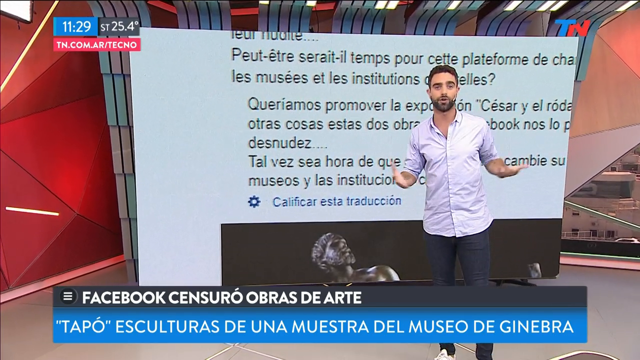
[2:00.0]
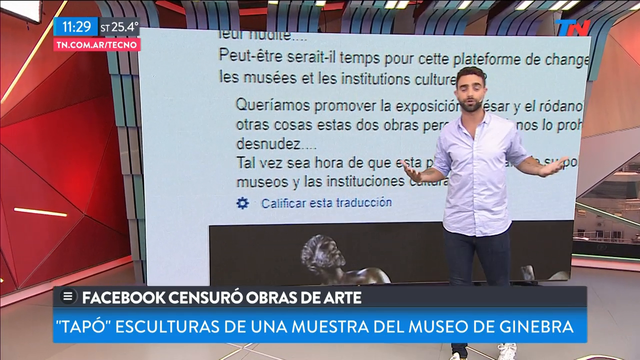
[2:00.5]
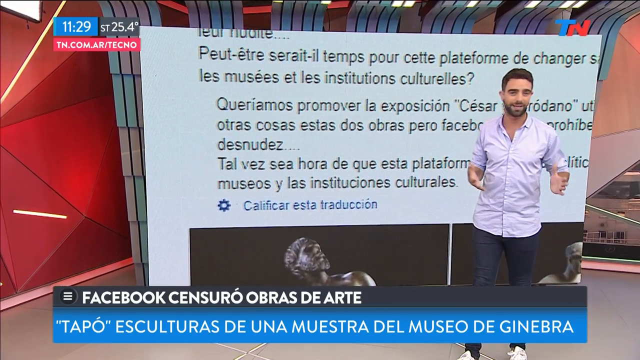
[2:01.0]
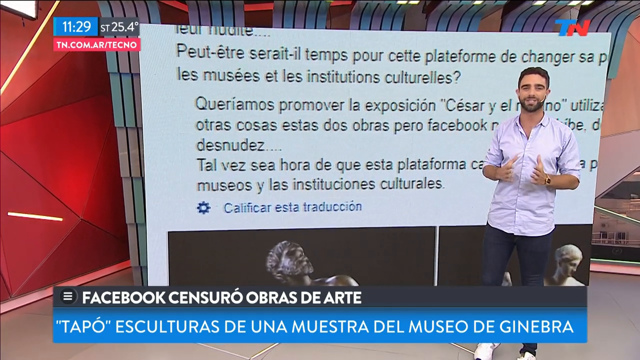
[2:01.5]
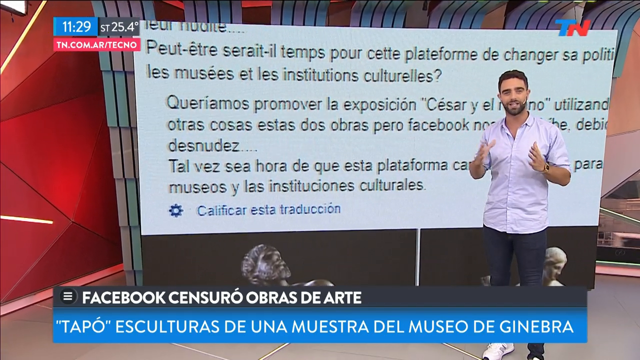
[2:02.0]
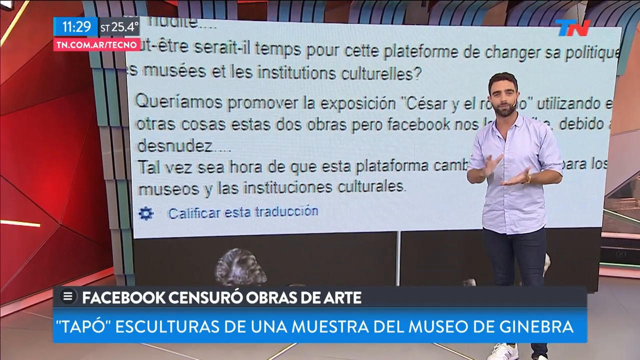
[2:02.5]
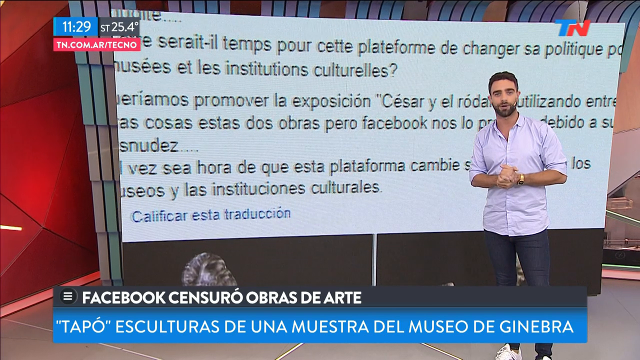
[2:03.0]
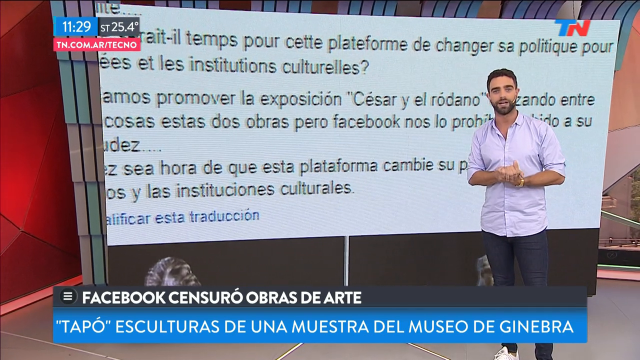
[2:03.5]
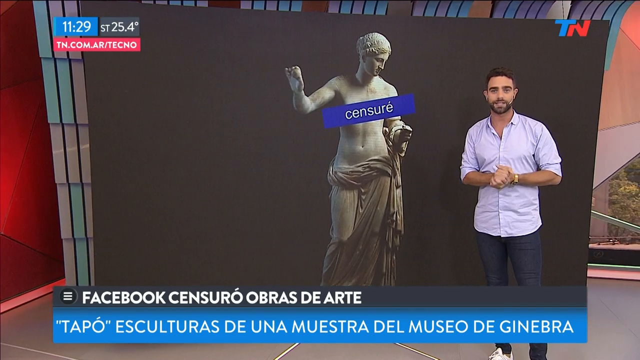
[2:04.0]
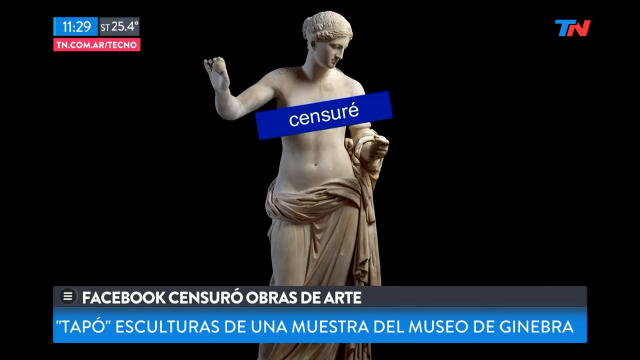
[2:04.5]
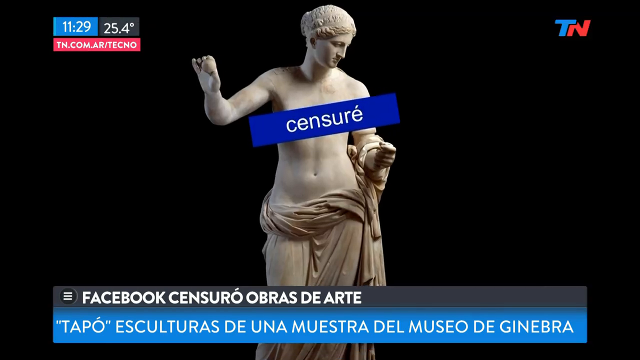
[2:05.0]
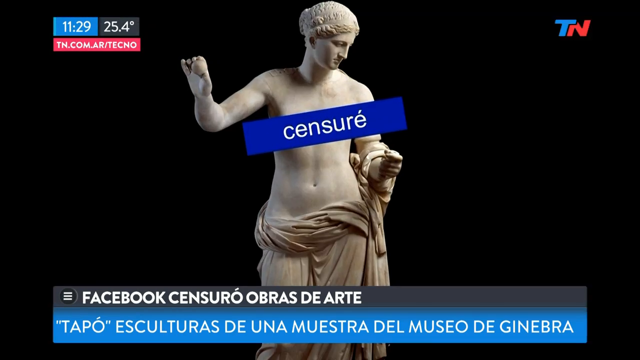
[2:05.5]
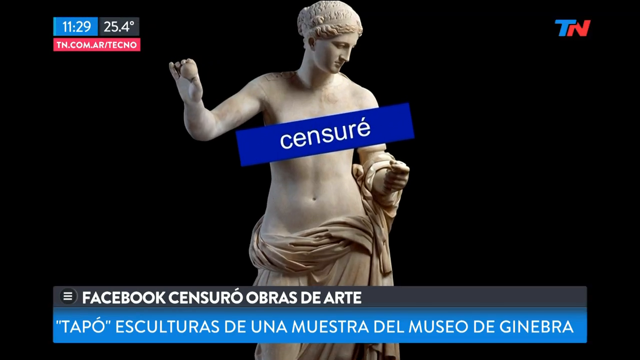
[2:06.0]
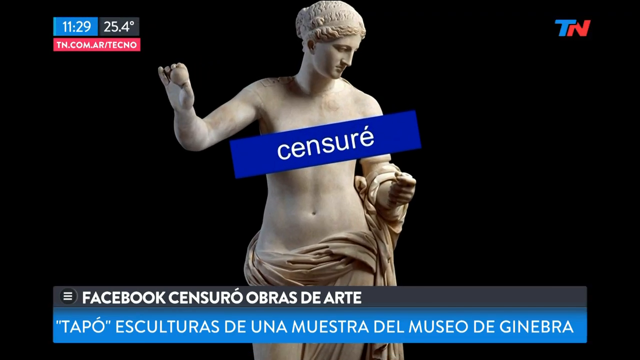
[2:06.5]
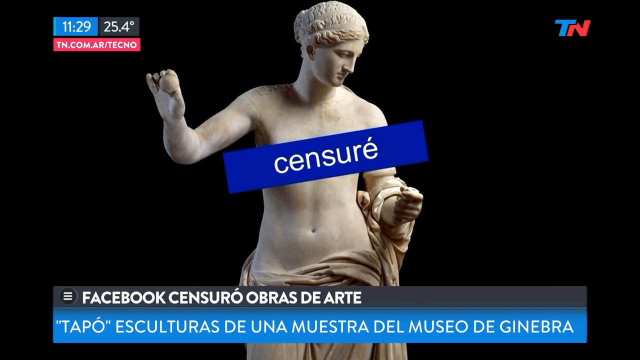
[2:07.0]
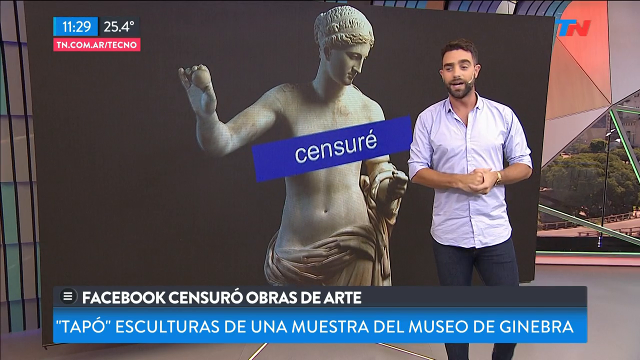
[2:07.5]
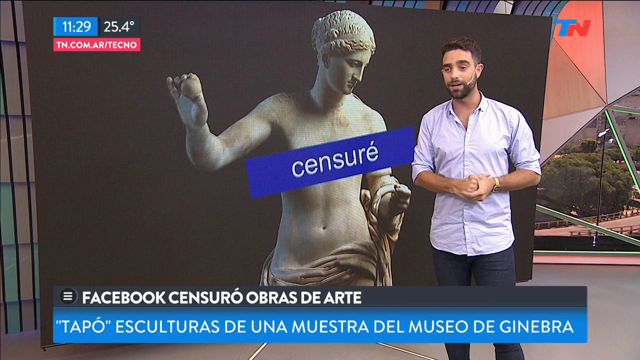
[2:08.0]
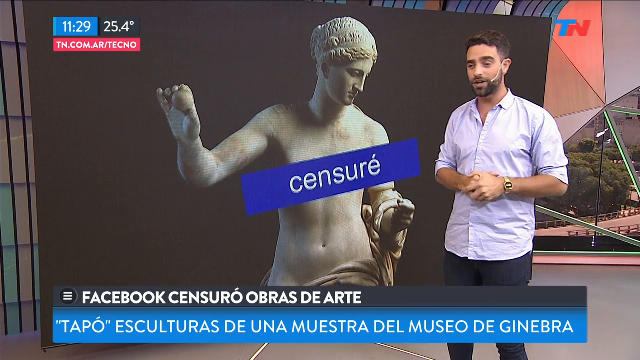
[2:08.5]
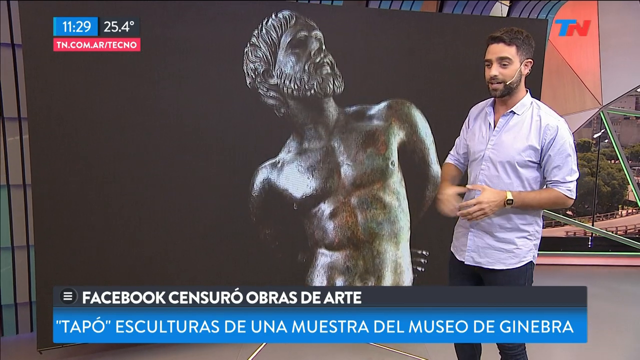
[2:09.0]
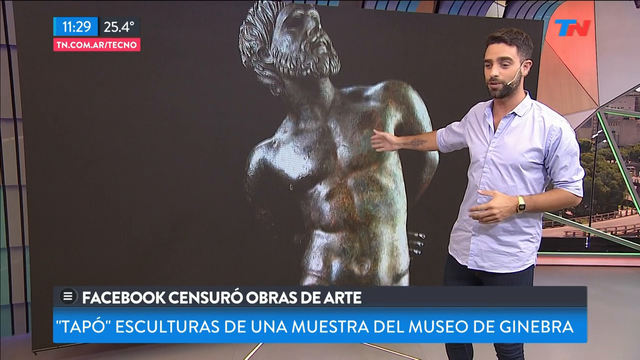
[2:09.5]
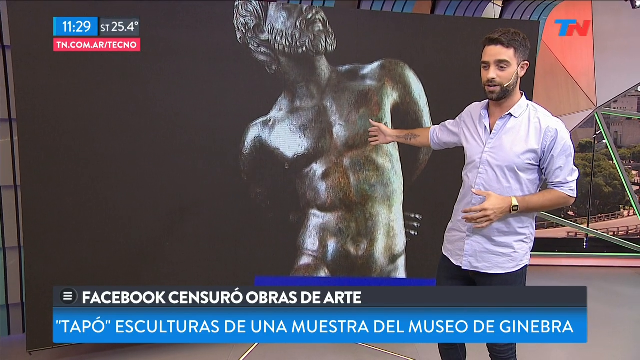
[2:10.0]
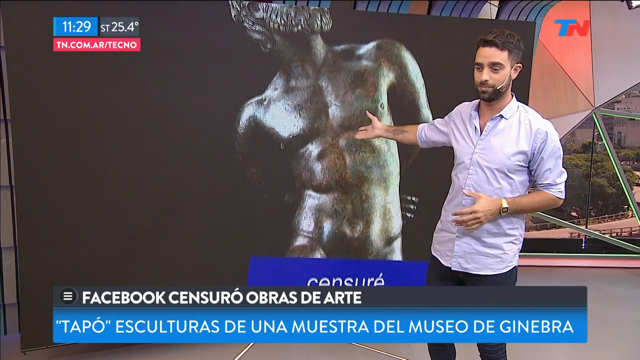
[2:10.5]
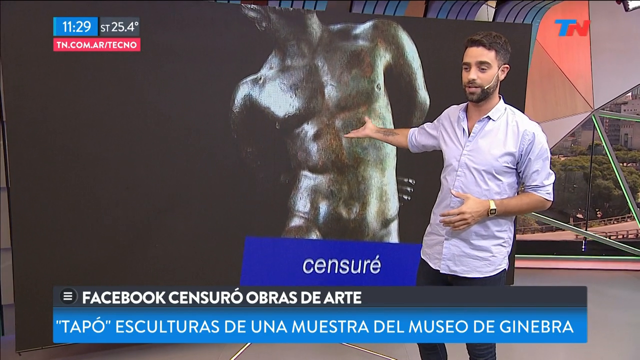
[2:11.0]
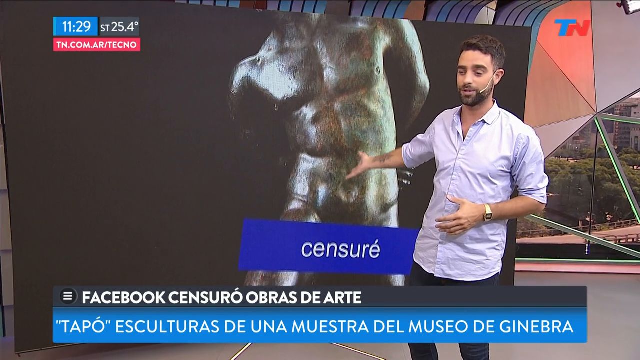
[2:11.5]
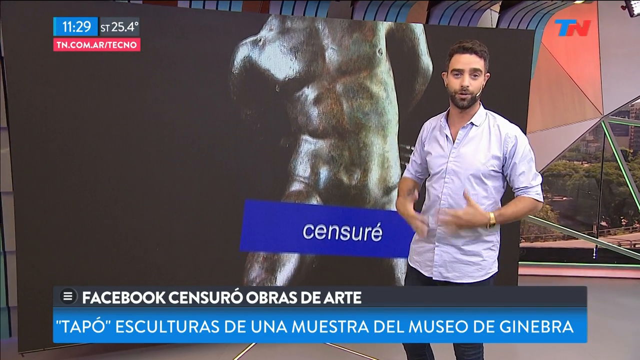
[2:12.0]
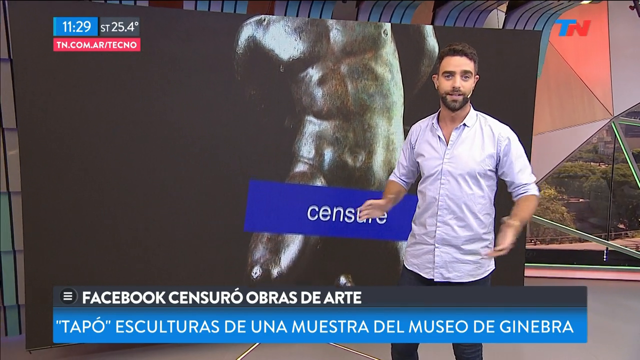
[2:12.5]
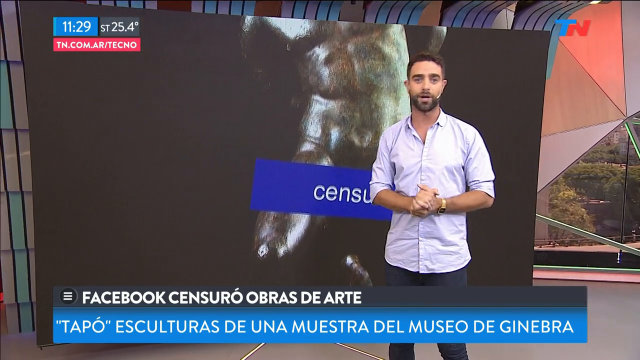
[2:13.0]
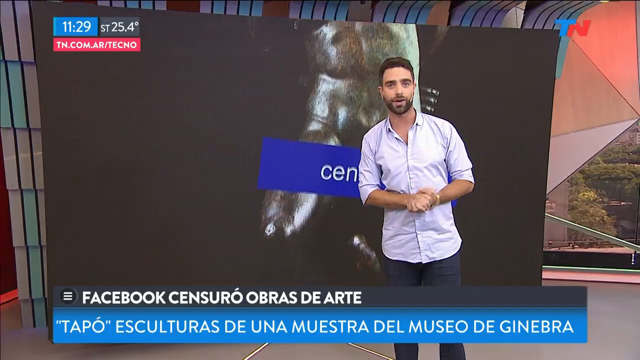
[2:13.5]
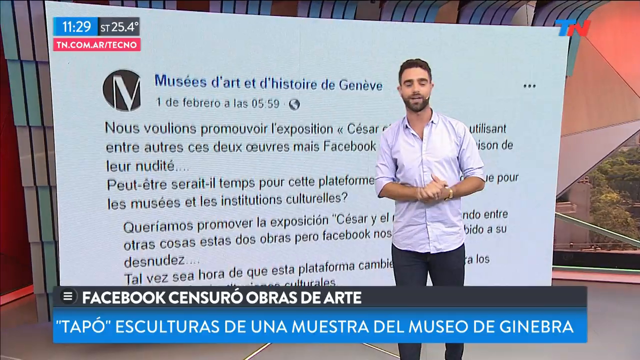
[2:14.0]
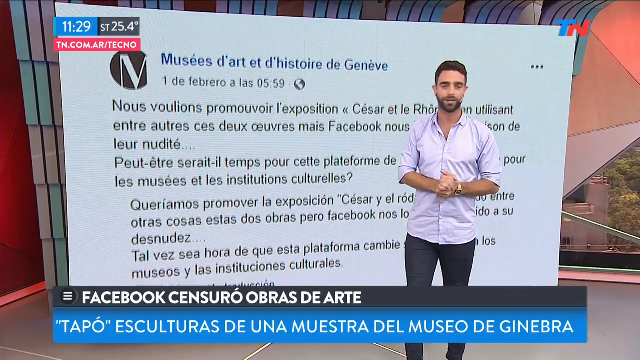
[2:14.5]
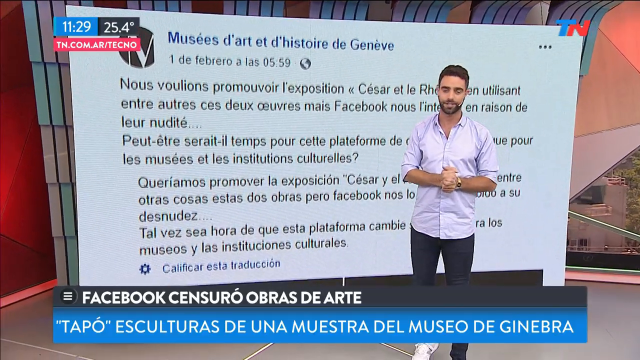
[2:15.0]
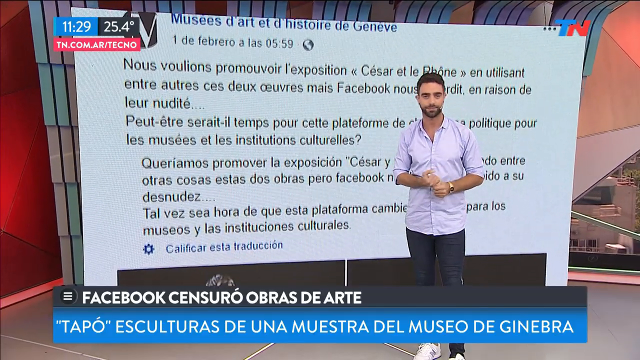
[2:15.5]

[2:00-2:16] The man continues his presentation about content projected on a wall, pointing at the projection and holding his hands together as he describes it. He is possibly addressing a crowd in the background. A Facebook handle is displayed at the bottom of the projection. The projection shows two statues of Asian men: one is naked, and the other is almost naked, with only a piece of cloth covering the waist.